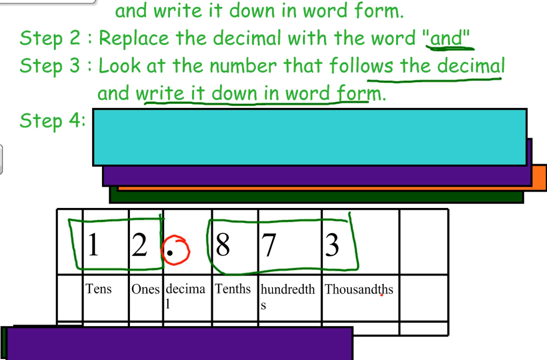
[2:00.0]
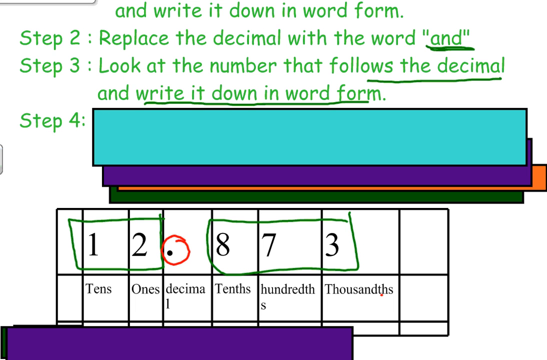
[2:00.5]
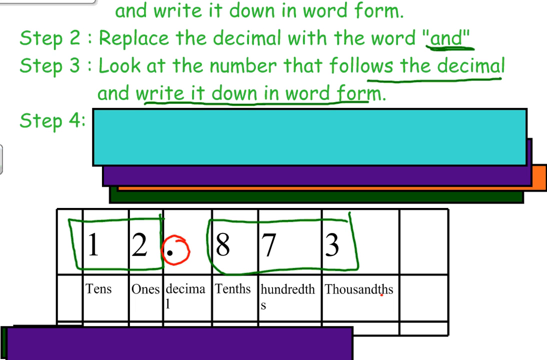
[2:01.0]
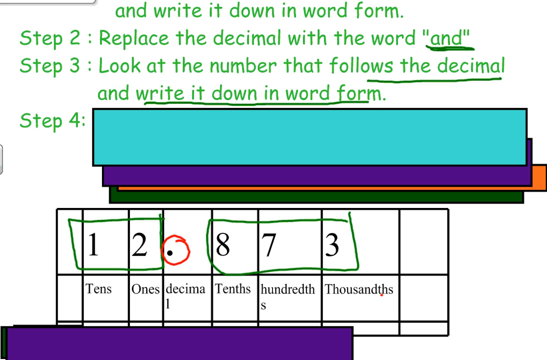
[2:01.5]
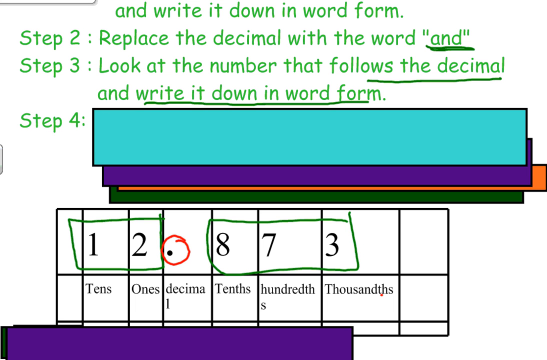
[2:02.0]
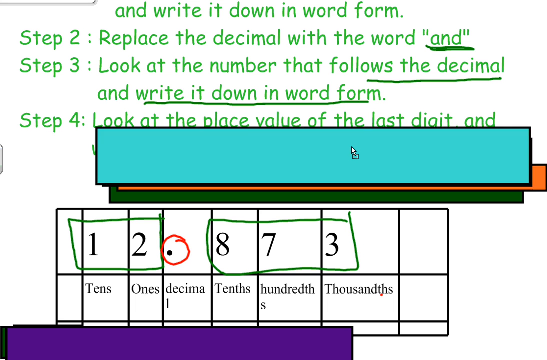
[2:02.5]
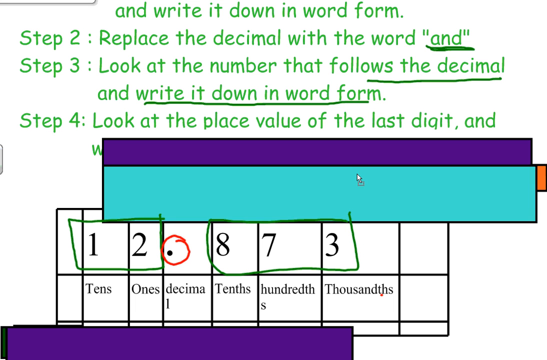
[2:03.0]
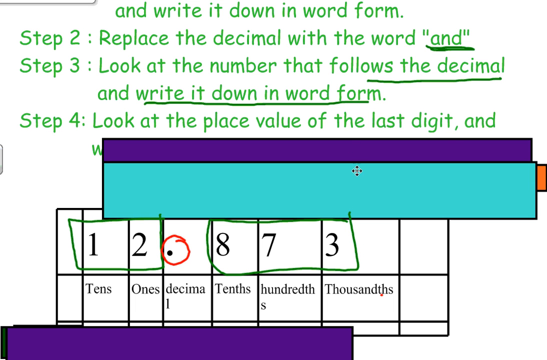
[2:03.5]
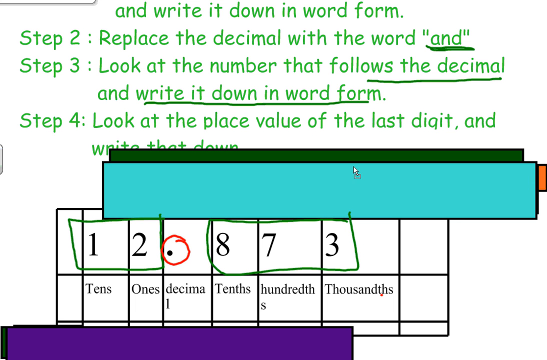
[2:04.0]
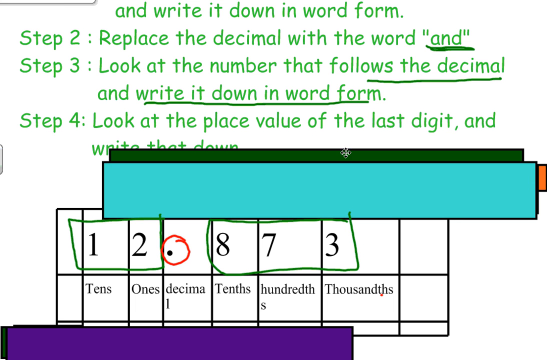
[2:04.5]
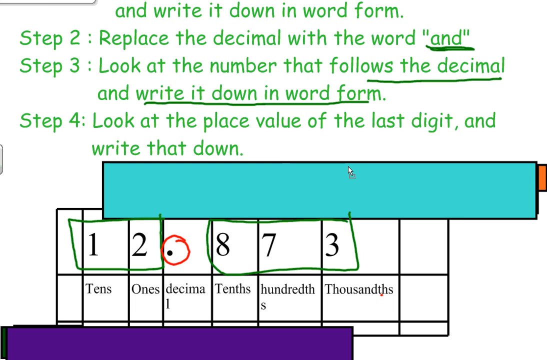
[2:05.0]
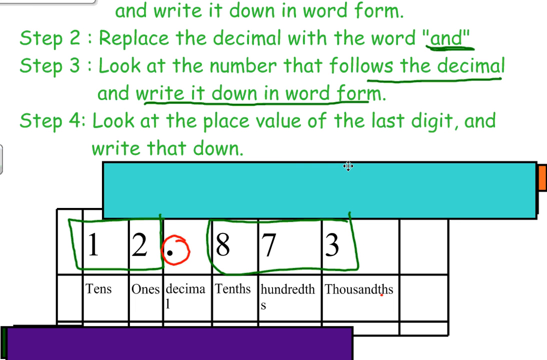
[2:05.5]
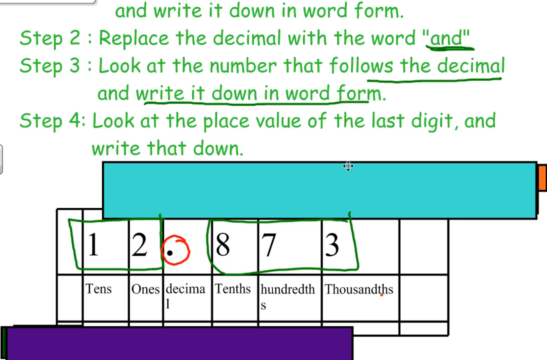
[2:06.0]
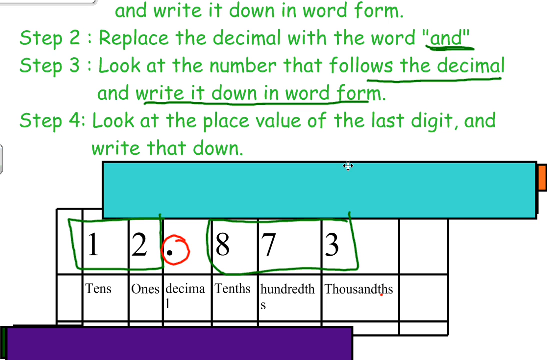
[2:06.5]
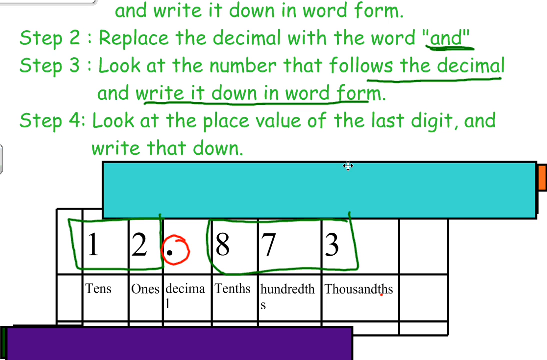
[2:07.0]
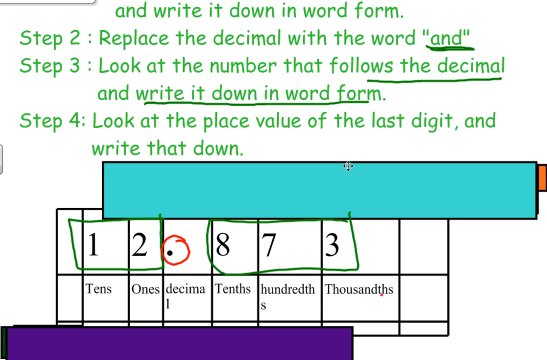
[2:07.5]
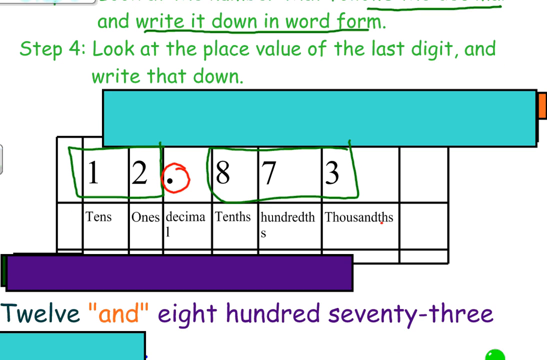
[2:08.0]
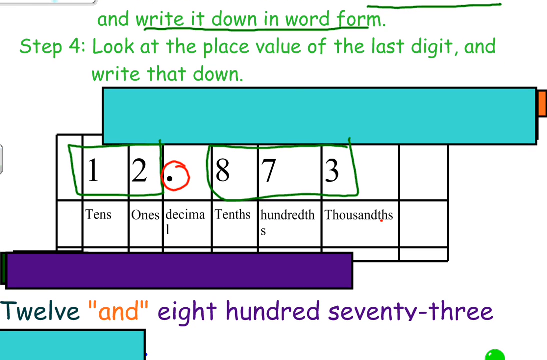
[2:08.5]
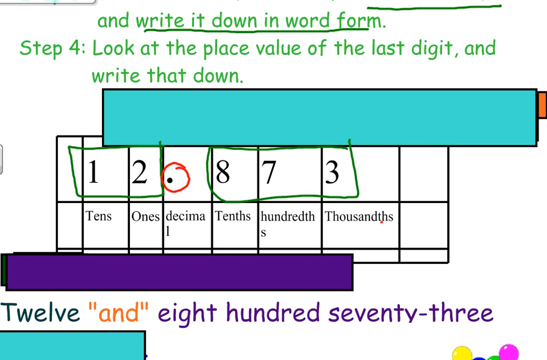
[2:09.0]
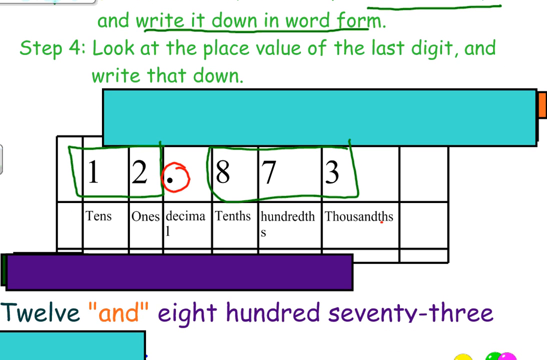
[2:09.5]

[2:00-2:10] Step 3 continues, and then Step 4 appears: look at the place value of the last digit and write that down. The value of the last digit is not shown yet; so far 873 is written in words.